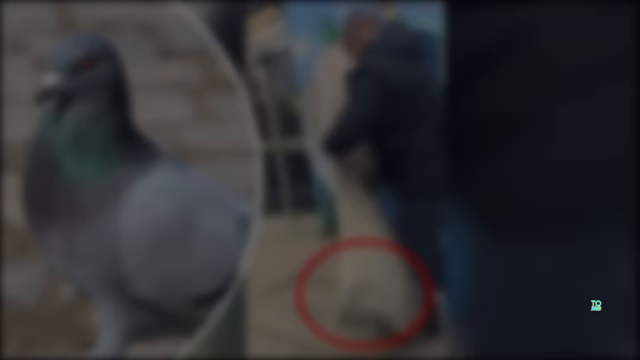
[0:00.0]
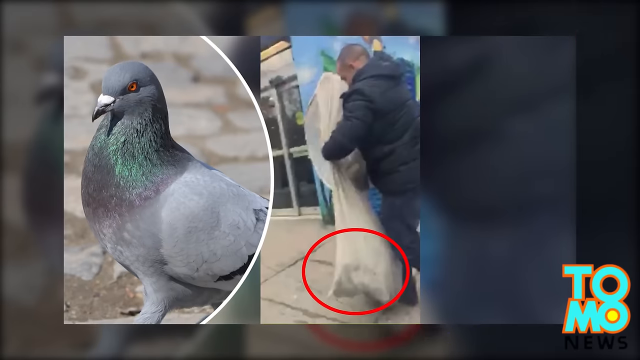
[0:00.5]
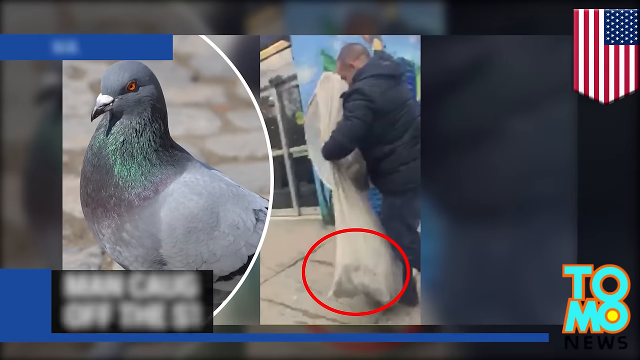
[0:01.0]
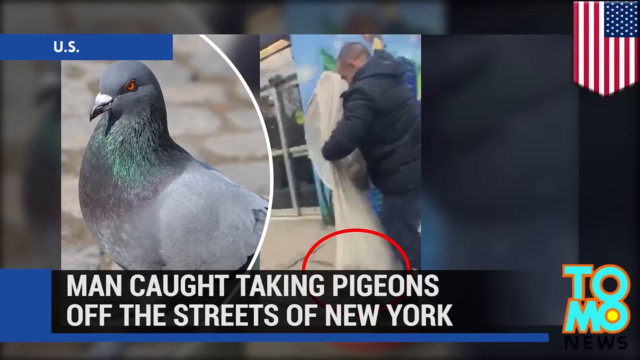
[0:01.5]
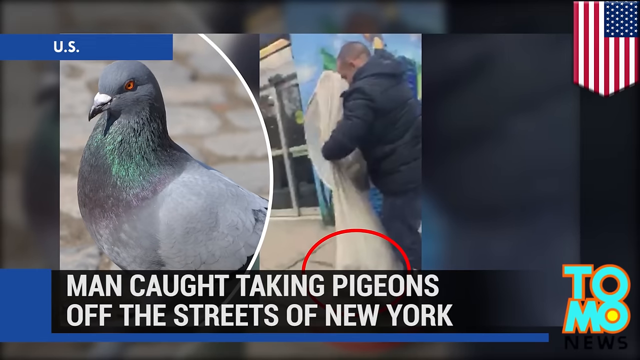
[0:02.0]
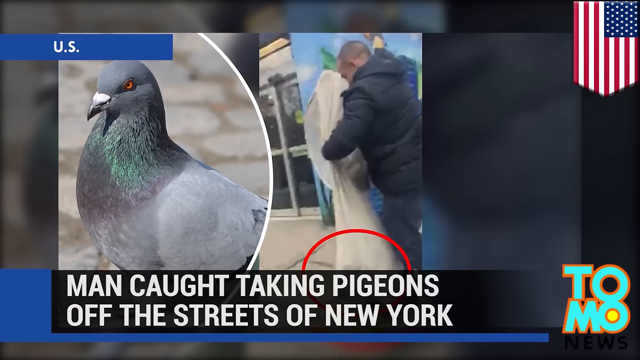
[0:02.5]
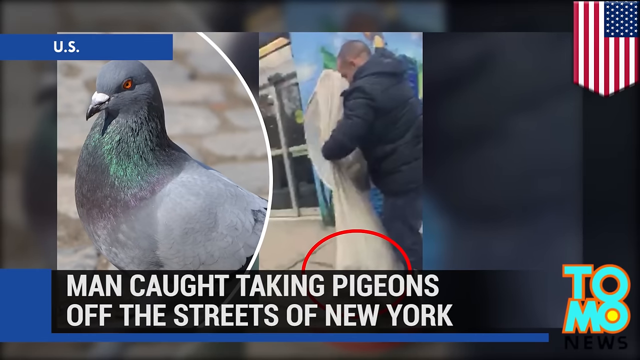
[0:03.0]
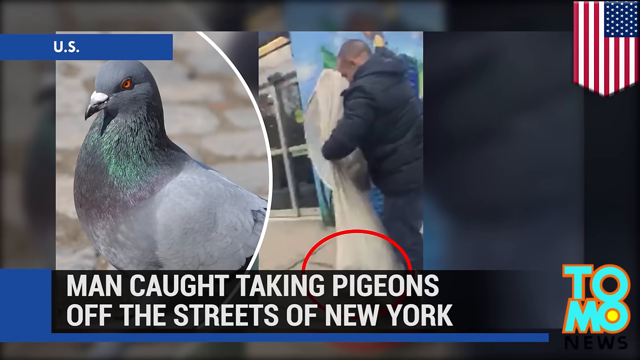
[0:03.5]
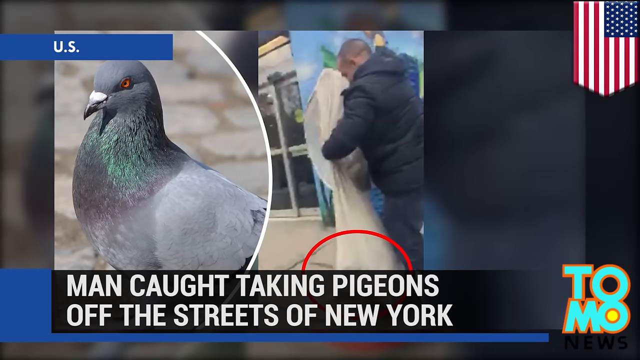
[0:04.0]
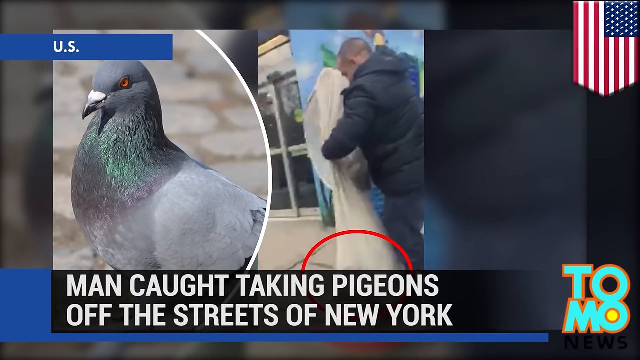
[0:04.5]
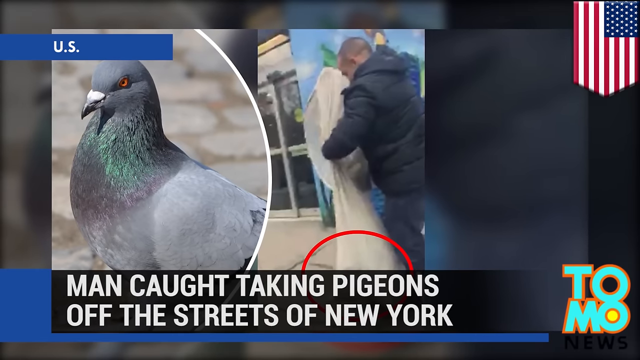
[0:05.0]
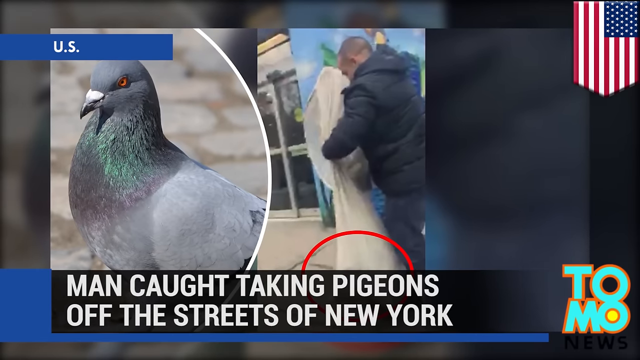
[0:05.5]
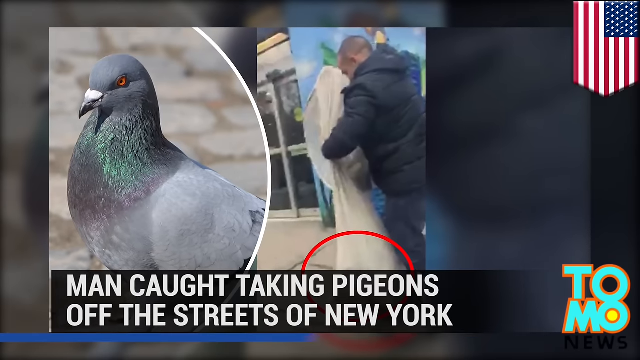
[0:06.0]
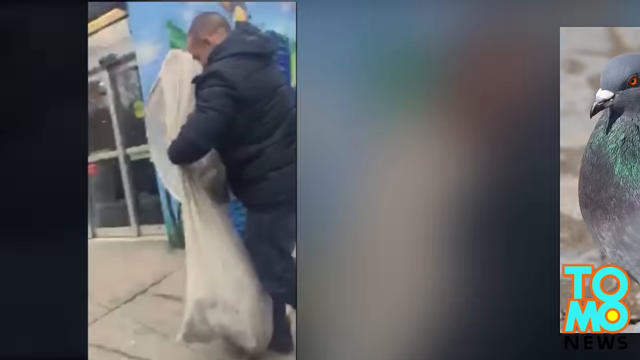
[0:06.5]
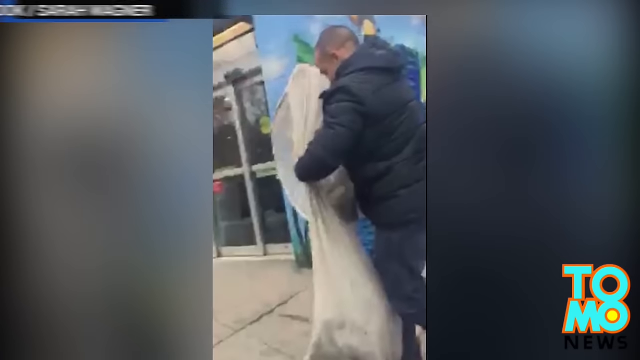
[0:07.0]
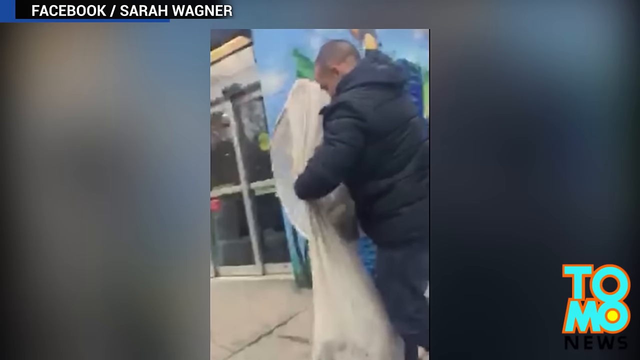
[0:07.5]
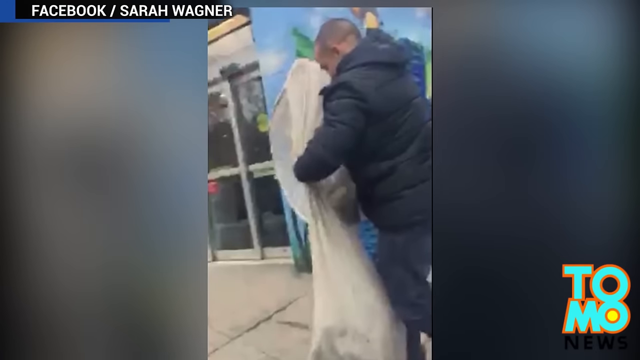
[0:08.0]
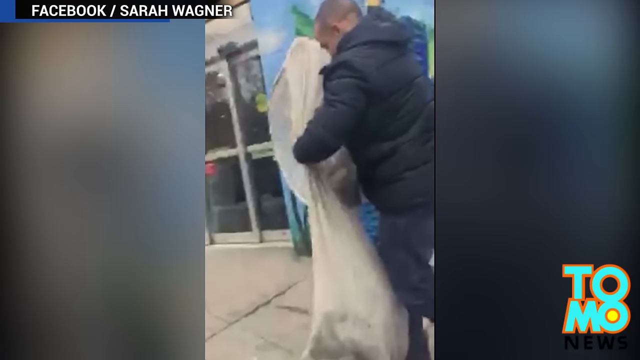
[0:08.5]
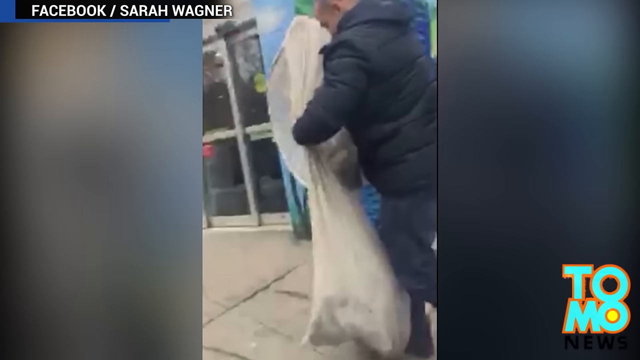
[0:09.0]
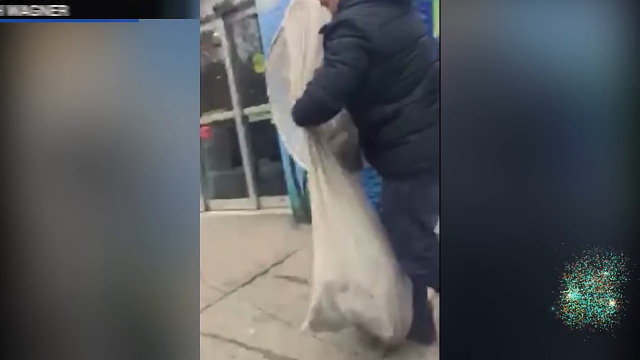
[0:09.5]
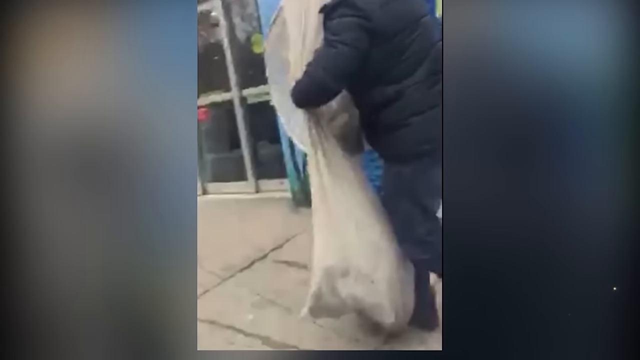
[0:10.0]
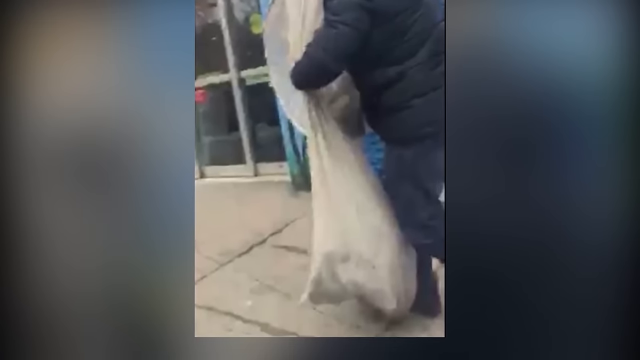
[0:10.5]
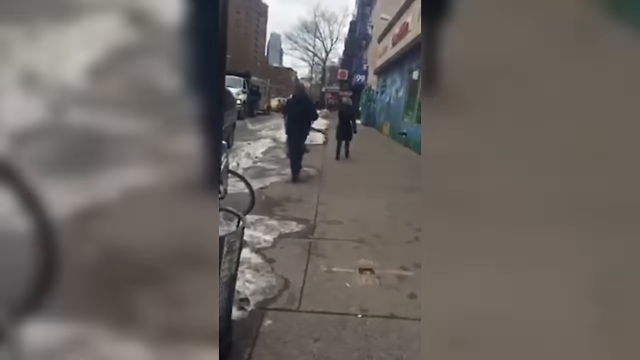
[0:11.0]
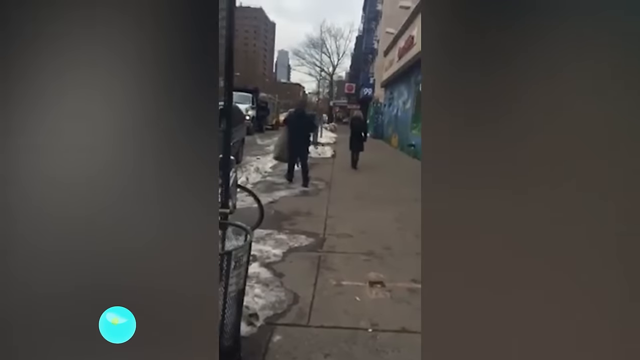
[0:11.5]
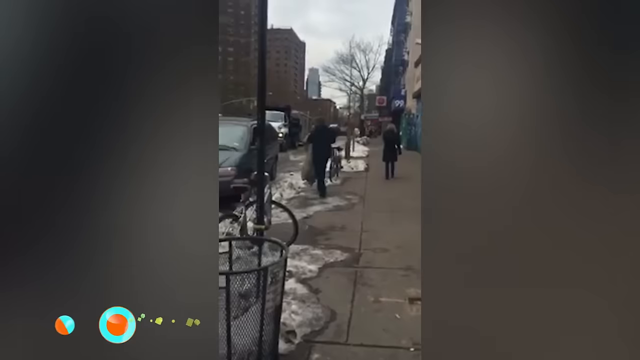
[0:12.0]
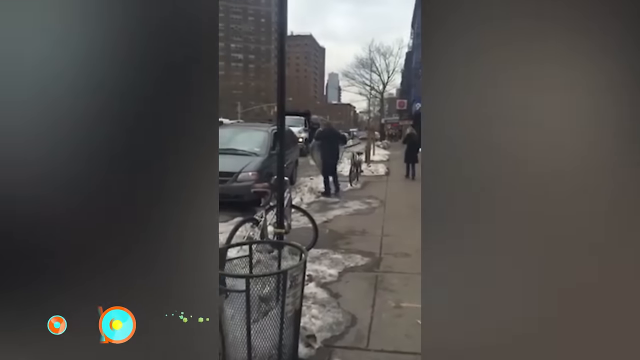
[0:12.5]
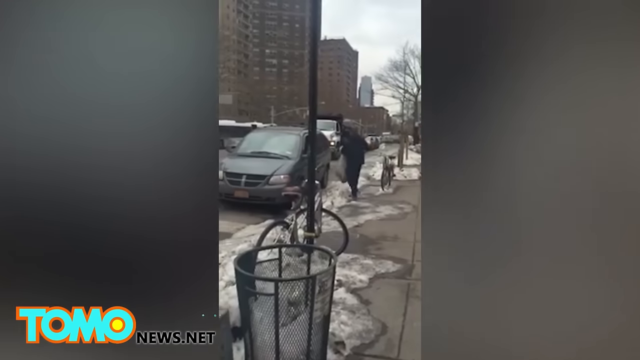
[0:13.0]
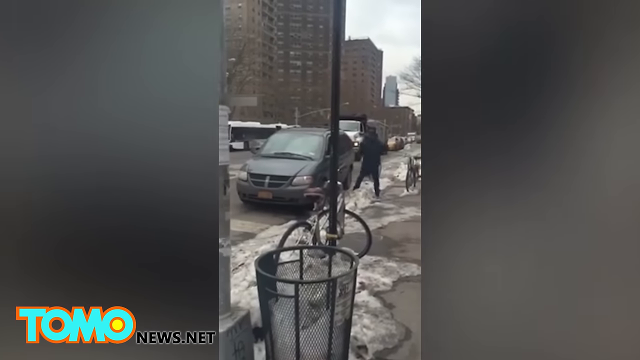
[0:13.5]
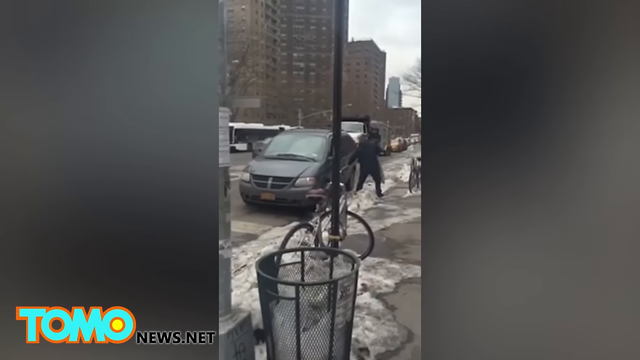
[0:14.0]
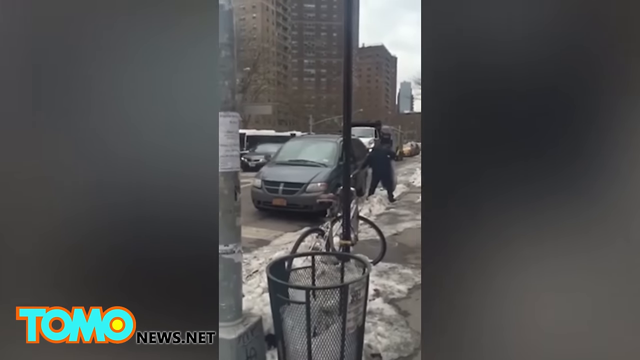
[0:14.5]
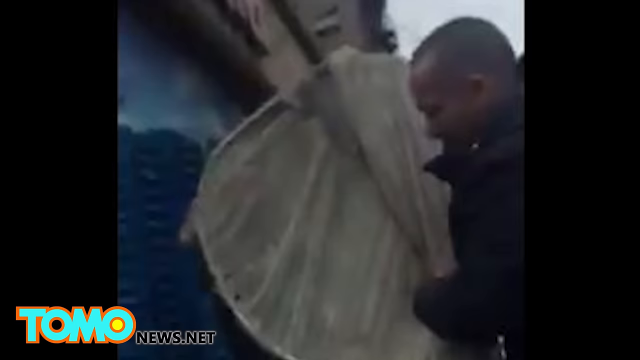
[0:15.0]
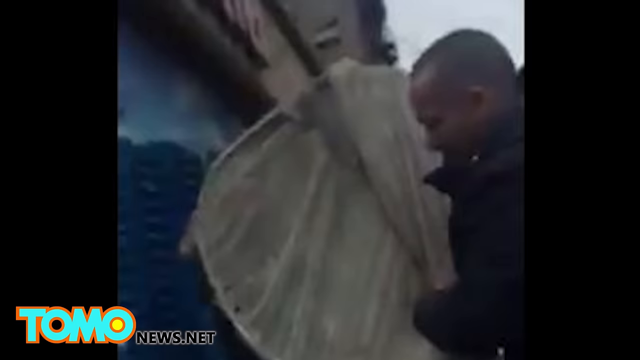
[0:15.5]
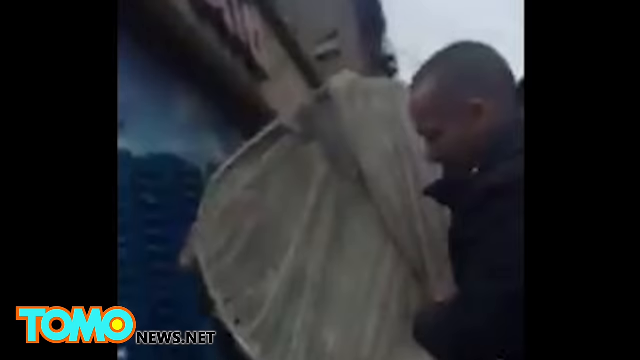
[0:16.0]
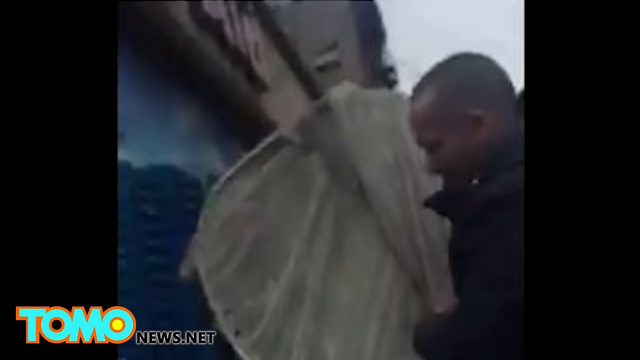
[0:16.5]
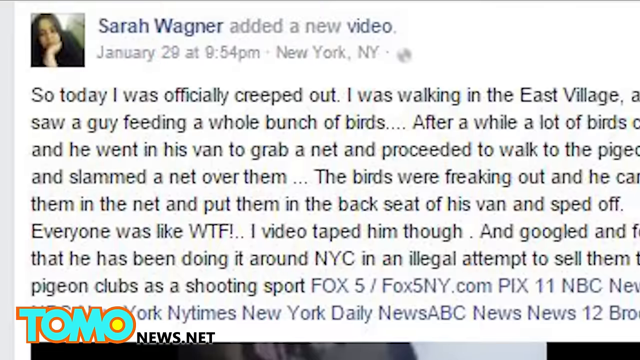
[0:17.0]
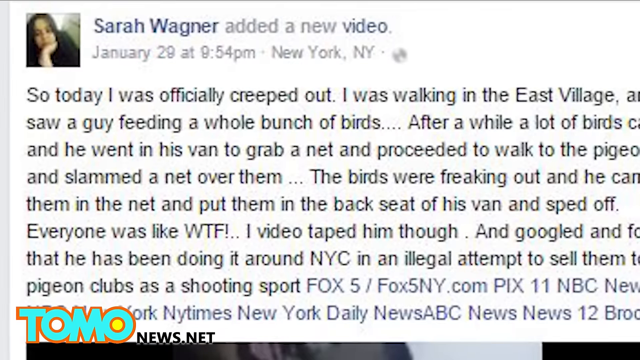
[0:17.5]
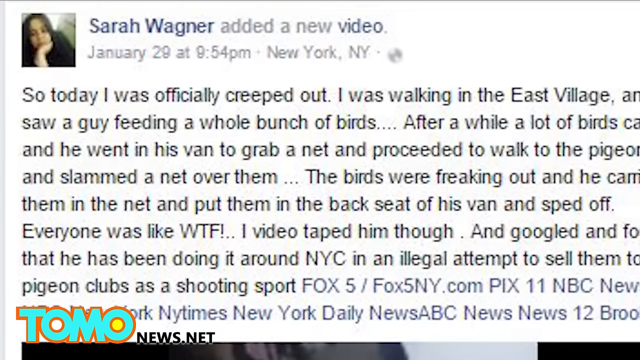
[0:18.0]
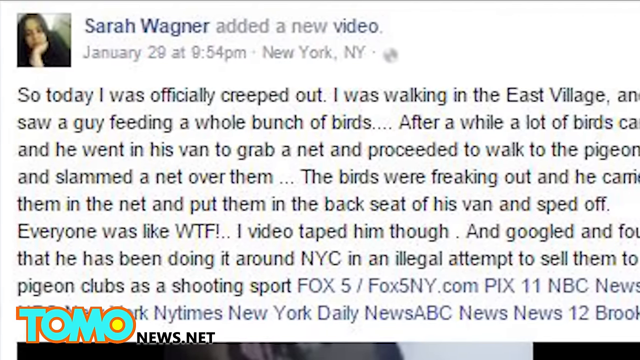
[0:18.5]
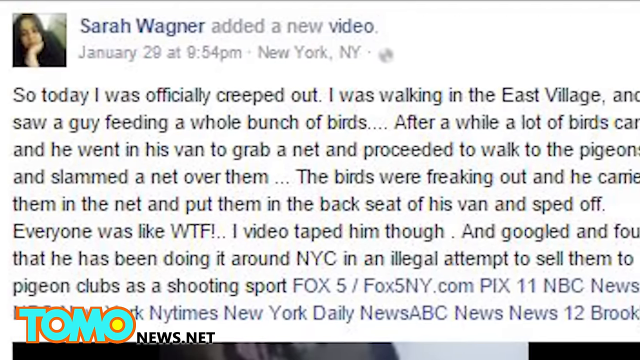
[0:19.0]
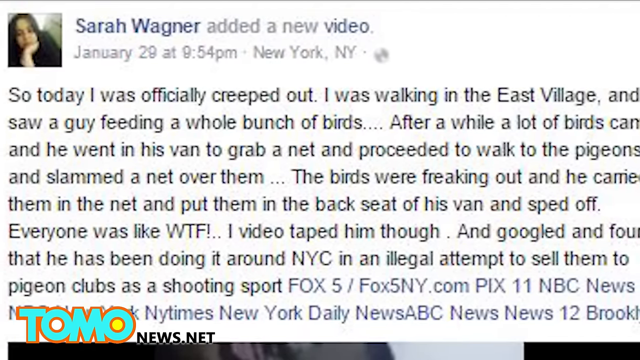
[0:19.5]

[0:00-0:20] The video opens with an image of a pigeon and a man with a burlap sack, which flips into view on the screen. The top right corner shows an American flag oriented vertically, and the bottom of the screen shows a logo reading "TOMO", with two letters on each line, in turquoise and orange. The caption under the image reads "Man Caught Taking Pigeons Off The Streets Of New York". After a transition, a caption in a corner reads "Facebook/Sarah Wagner", and the image shows a man wearing a black puffer jacket with a burlap sack that presumably has pigeons inside it. The screen transitions again, showing a tomonews.net logo in the bottom left corner and a man walking towards a grey Dodge Grand Caravan and opening the rear door while holding a burlap sack of pigeons. This footage was shot in vertical orientation. The screen then changes to show a Facebook post by Sarah Wagner about this man stealing pigeons off the street.